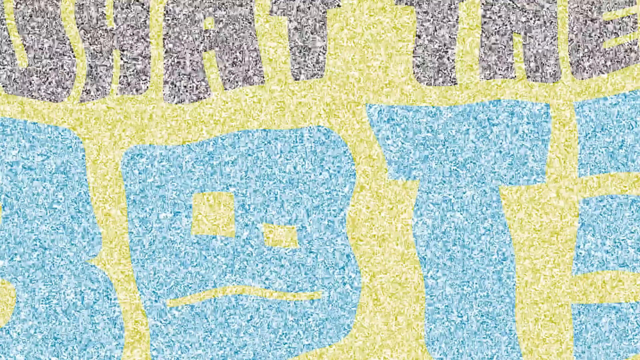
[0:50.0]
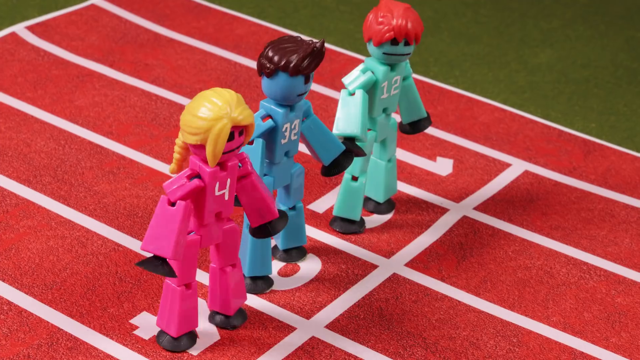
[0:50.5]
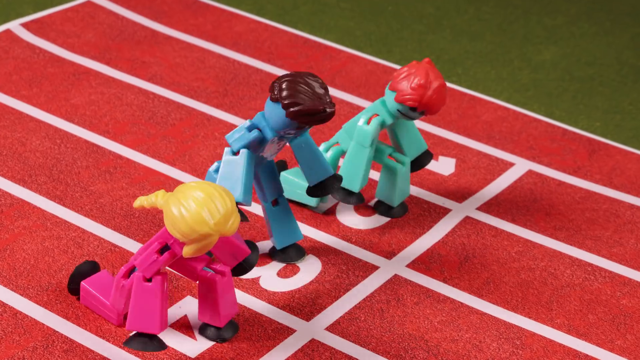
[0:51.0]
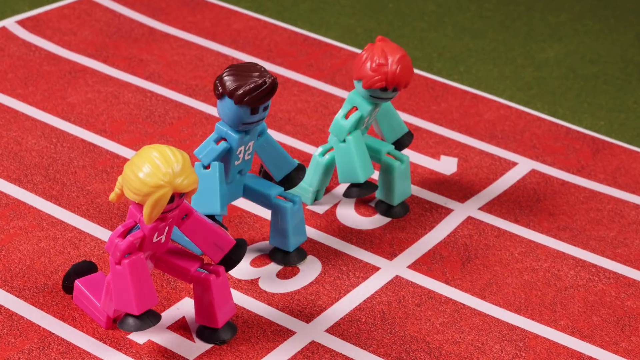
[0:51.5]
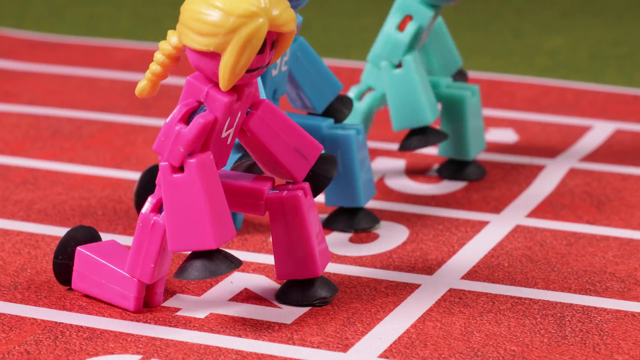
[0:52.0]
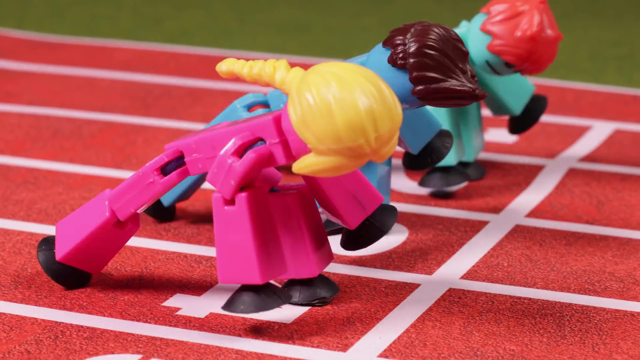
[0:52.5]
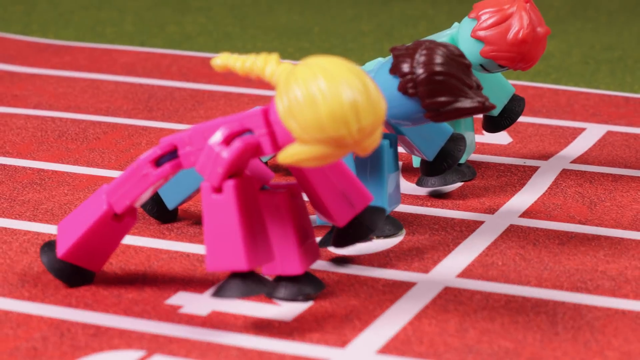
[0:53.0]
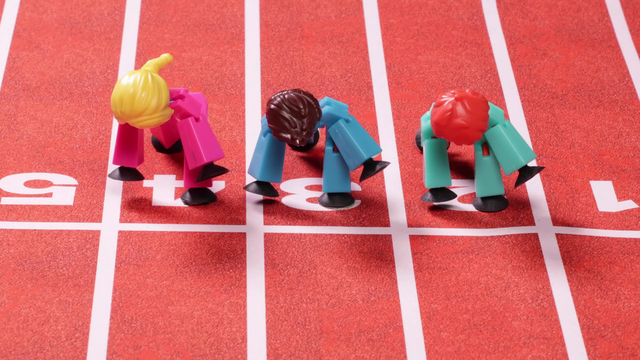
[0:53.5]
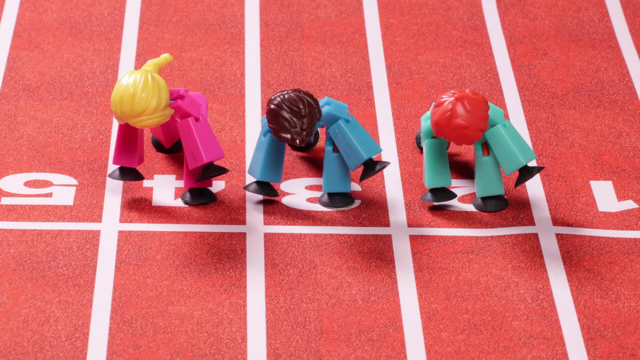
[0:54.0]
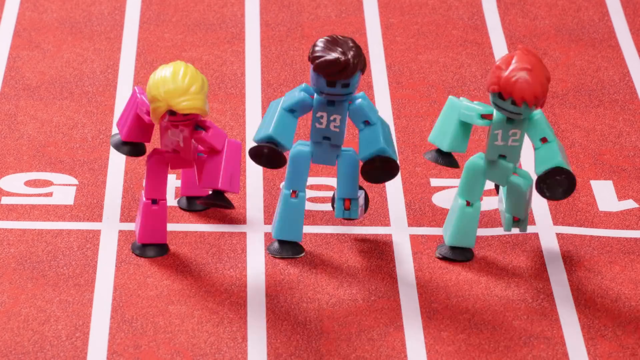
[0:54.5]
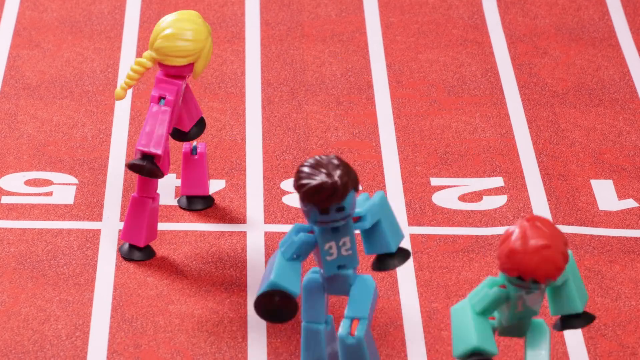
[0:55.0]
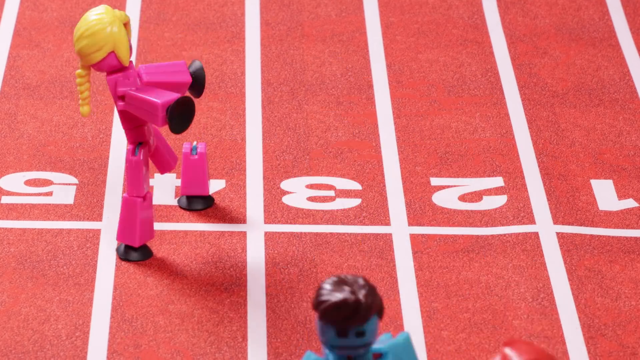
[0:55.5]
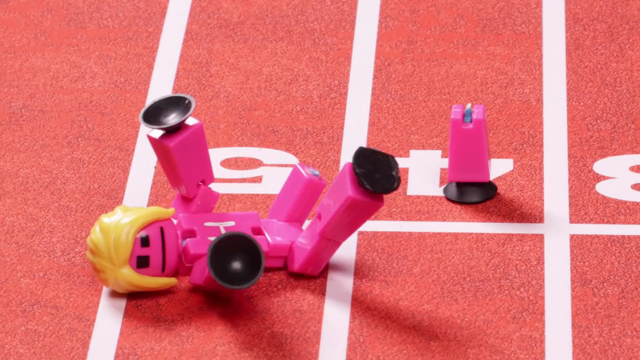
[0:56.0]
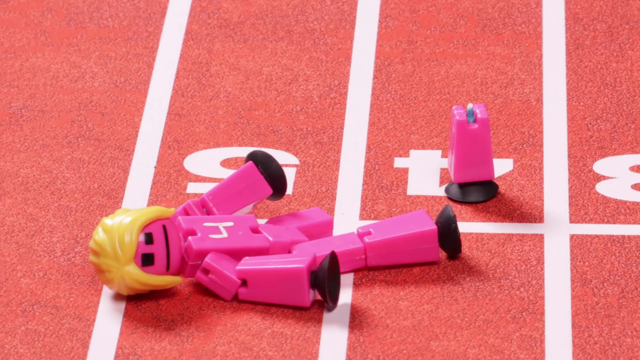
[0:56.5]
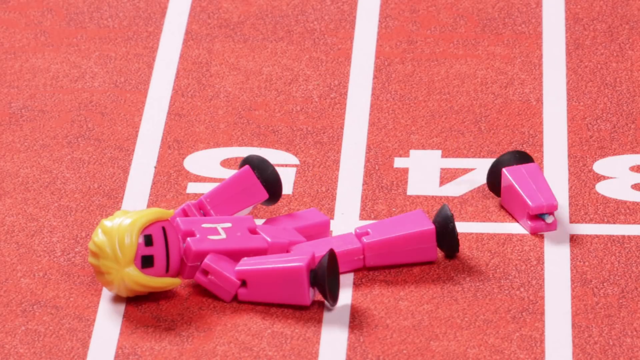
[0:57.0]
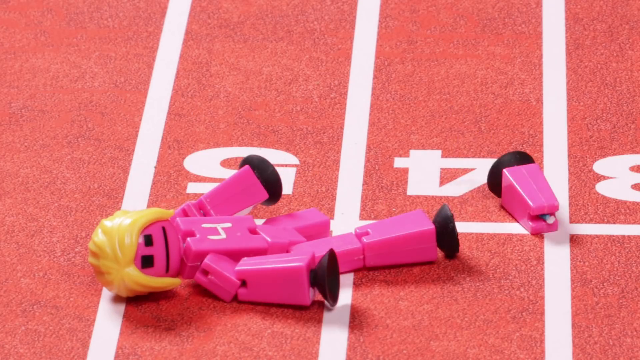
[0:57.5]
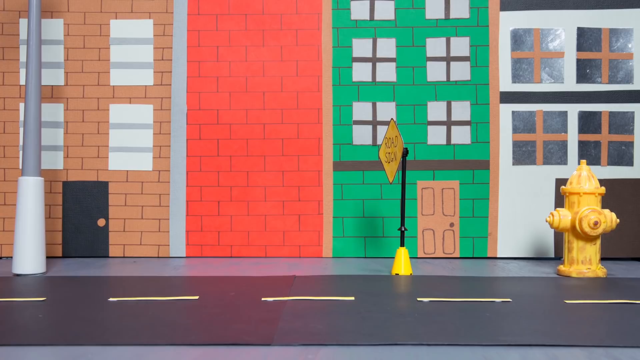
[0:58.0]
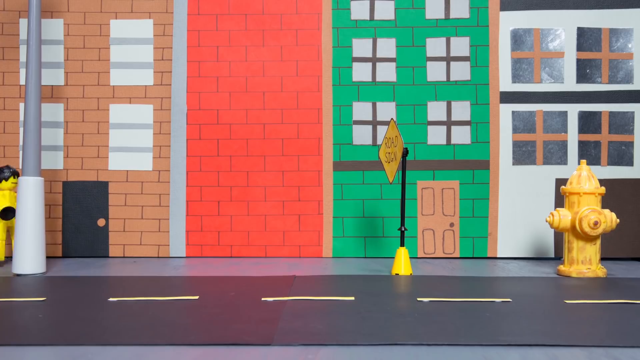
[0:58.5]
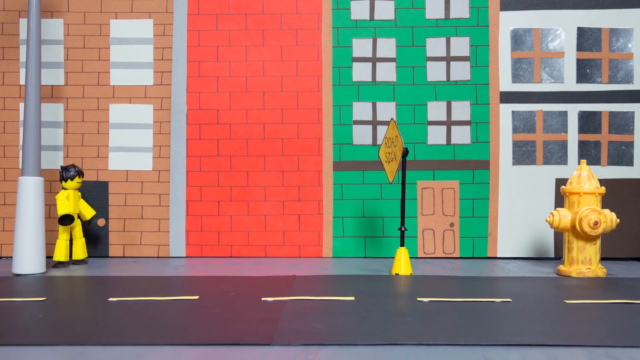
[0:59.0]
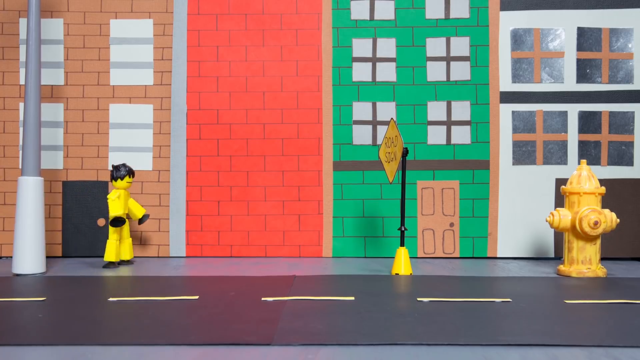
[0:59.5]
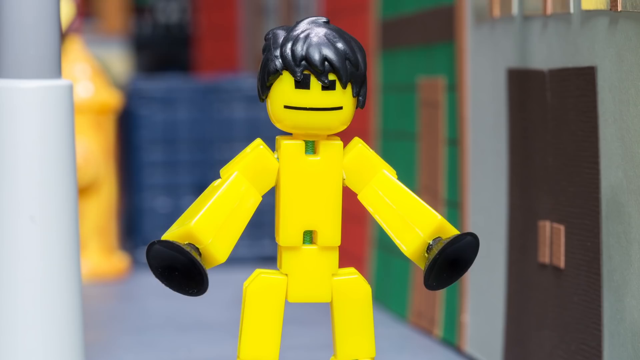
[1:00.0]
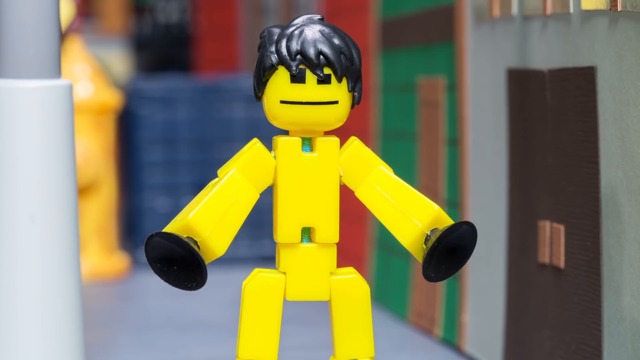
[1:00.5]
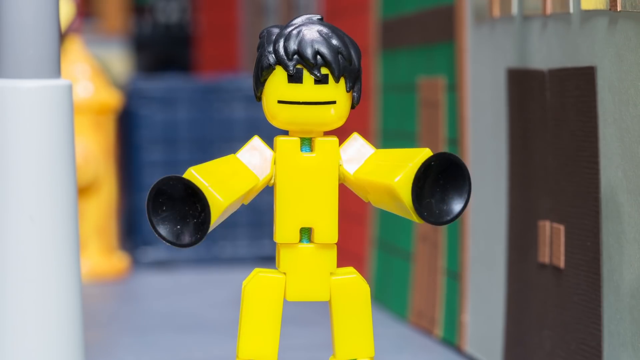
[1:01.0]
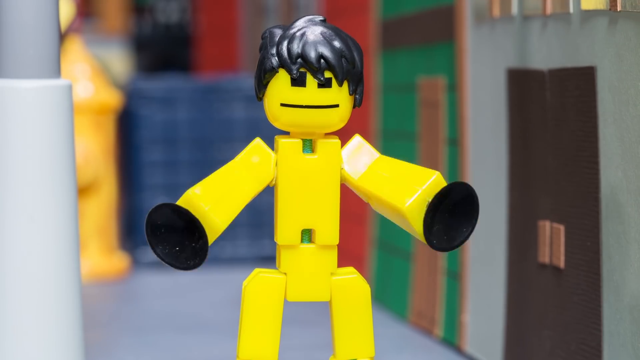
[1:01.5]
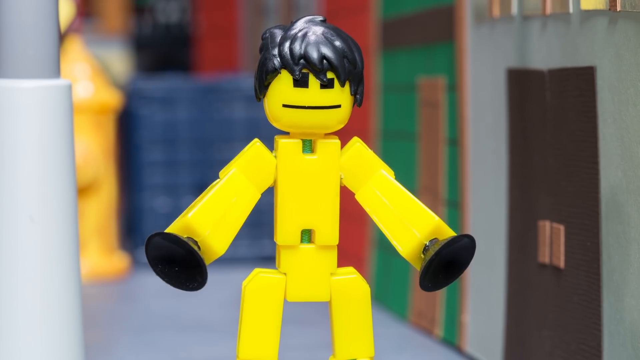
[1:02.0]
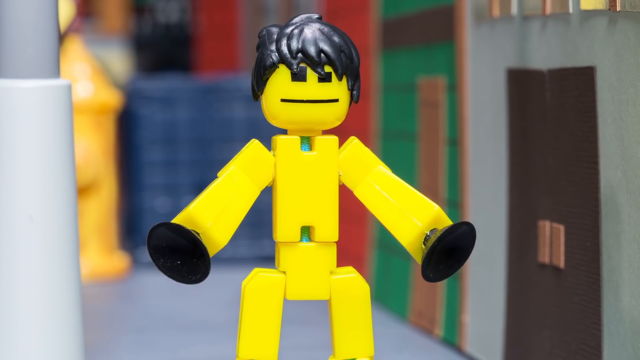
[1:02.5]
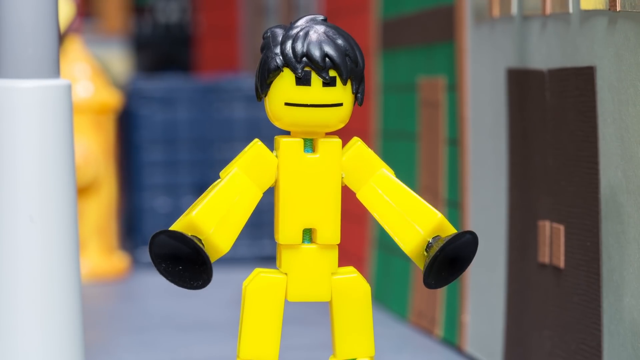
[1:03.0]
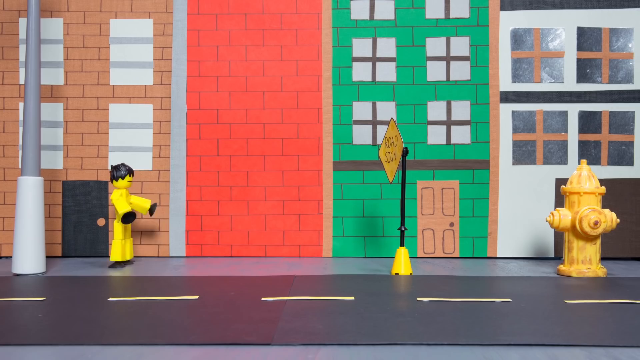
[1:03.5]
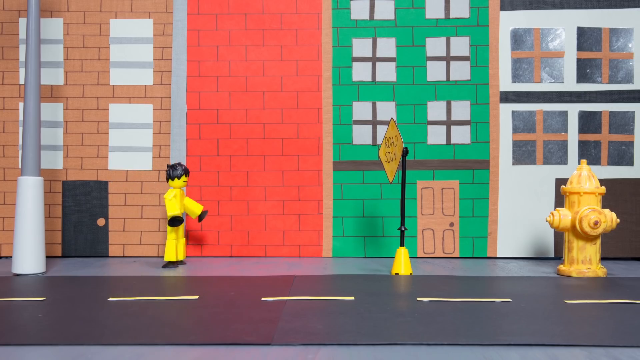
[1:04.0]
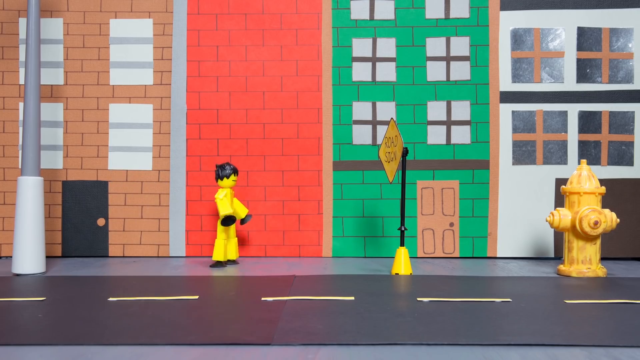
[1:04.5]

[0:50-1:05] After a brief image with a lot of static, the screen says "What the Bot". It cuts to a red track and field track with white lines, where three figurines stand next to each other. The one closest to the camera is pink with long blonde hair and a braid. In the center is a blue figurine with the number 32 on his chest and short brown hair. Next to that is a turquoise figurine with the number 12 on his chest and short red hair. They crouch down, ready to race. The two on the left begin the race, but the pink figurine's leg has detached, so she cannot run and falls to the floor, and so does the leg. The scene switches to a city with paper-looking buildings and a yellow fire hydrant, where a yellow figurine with black hair walks along the street.